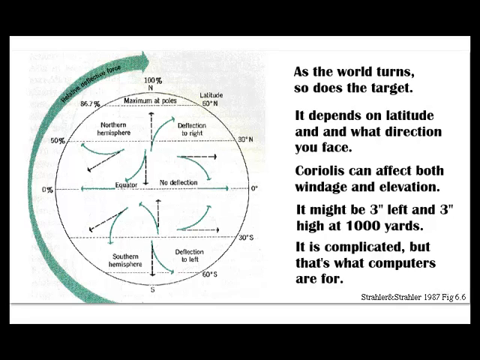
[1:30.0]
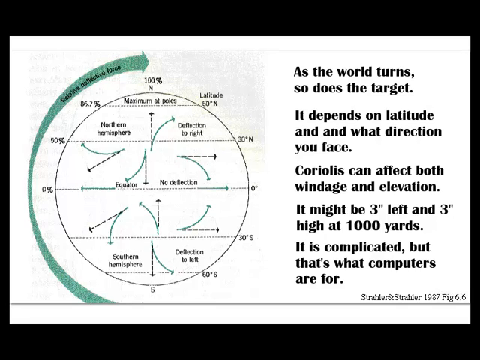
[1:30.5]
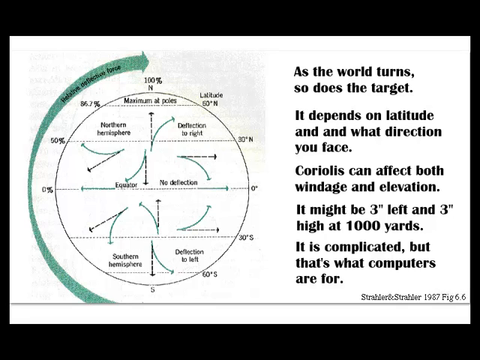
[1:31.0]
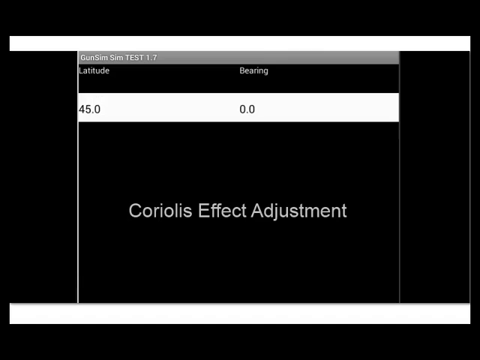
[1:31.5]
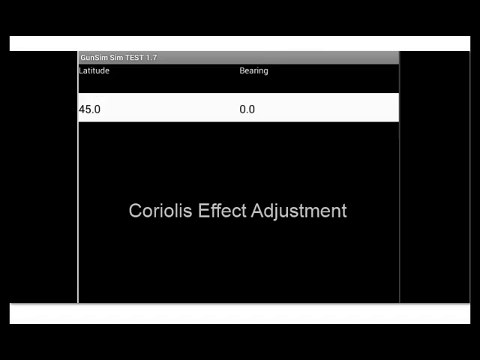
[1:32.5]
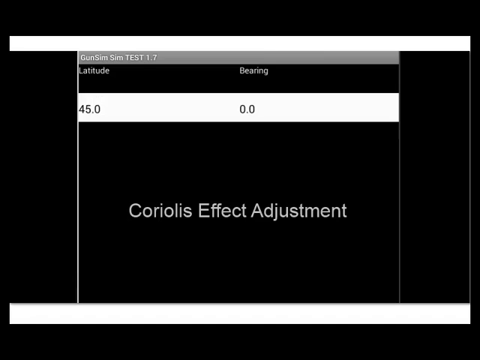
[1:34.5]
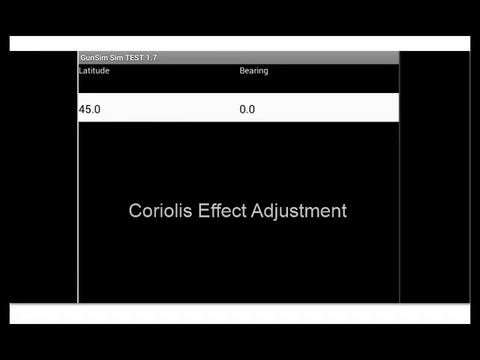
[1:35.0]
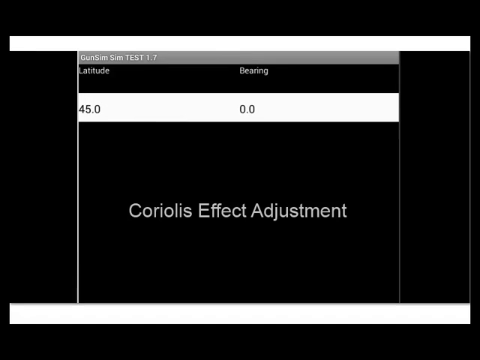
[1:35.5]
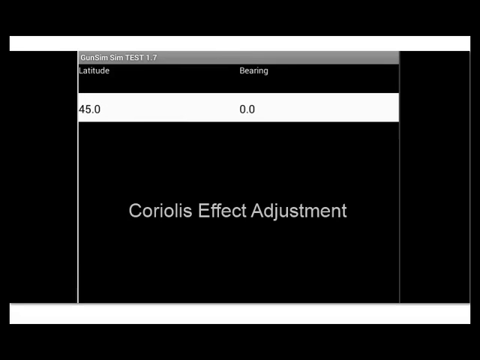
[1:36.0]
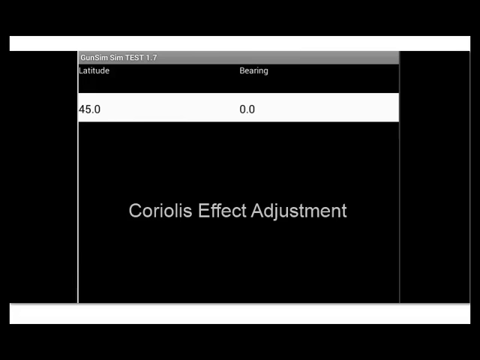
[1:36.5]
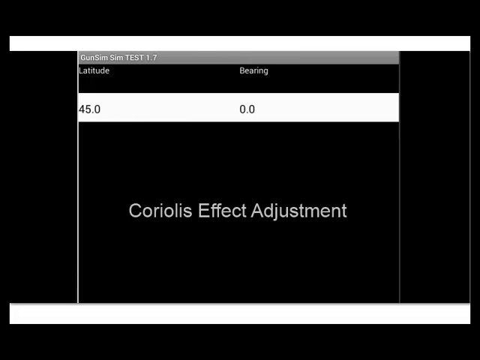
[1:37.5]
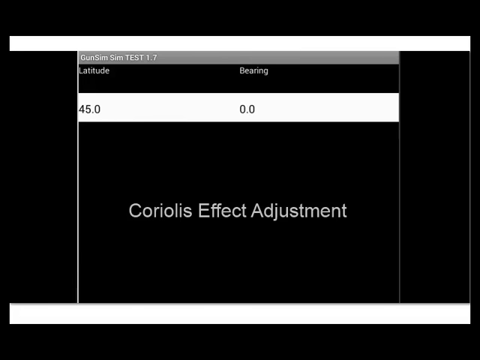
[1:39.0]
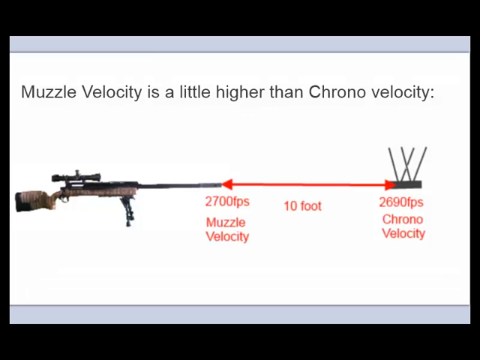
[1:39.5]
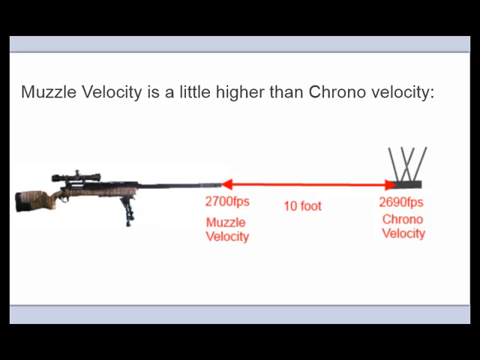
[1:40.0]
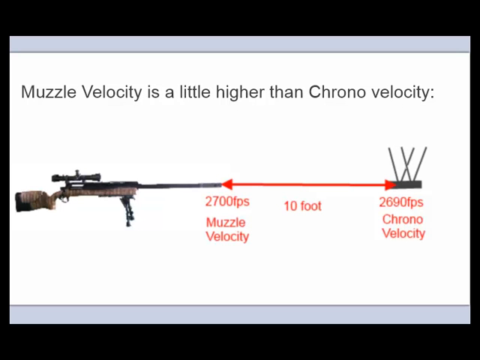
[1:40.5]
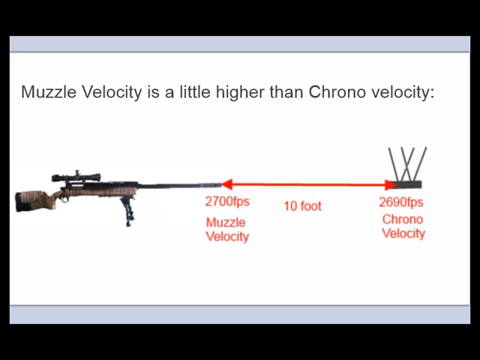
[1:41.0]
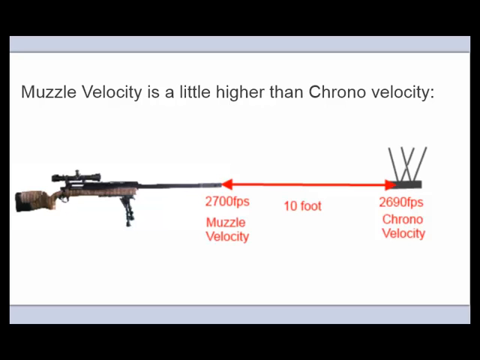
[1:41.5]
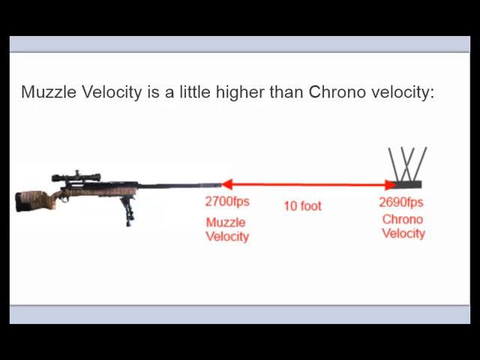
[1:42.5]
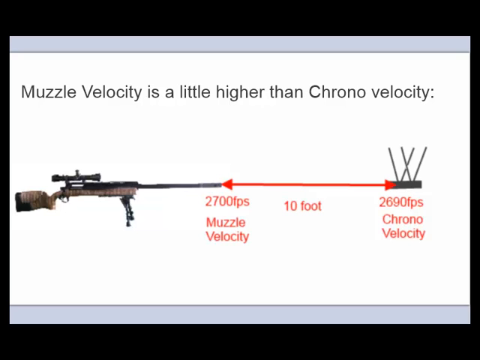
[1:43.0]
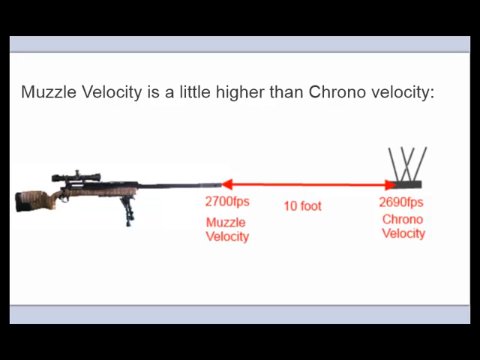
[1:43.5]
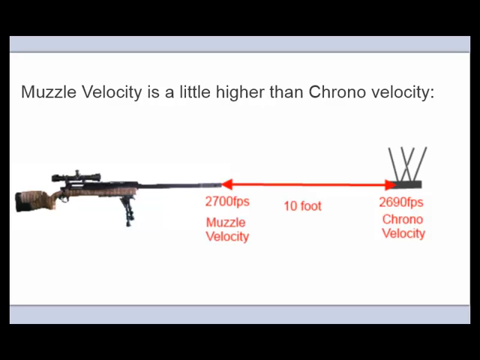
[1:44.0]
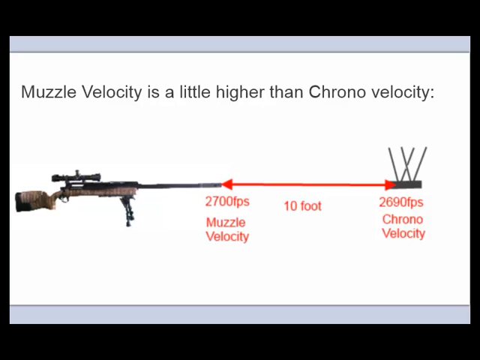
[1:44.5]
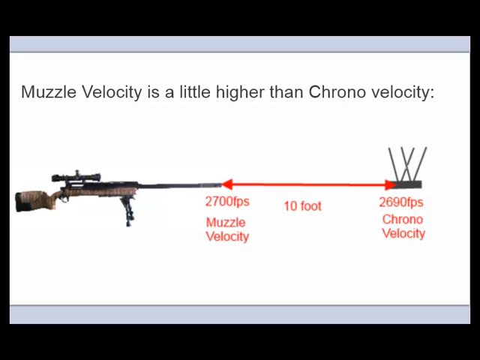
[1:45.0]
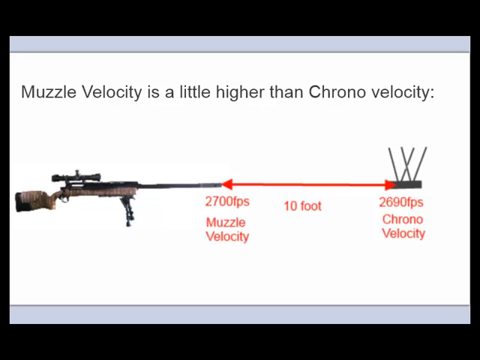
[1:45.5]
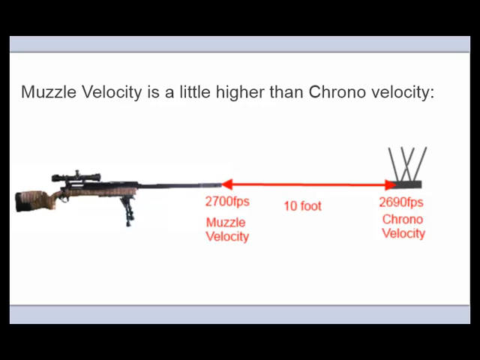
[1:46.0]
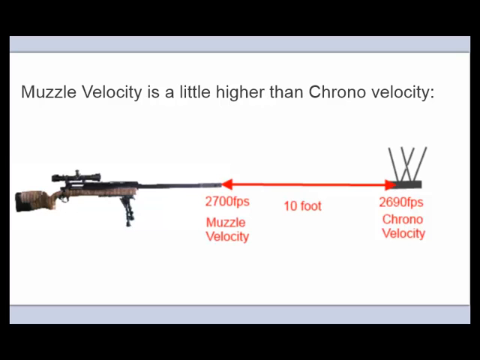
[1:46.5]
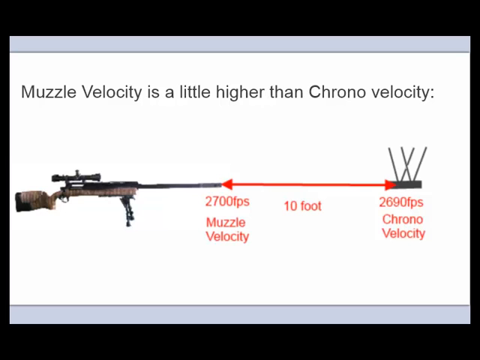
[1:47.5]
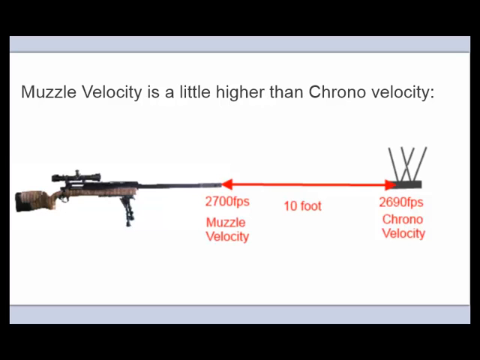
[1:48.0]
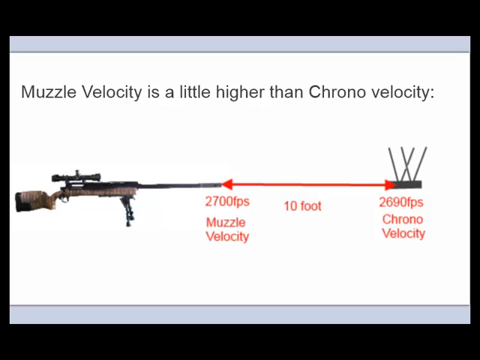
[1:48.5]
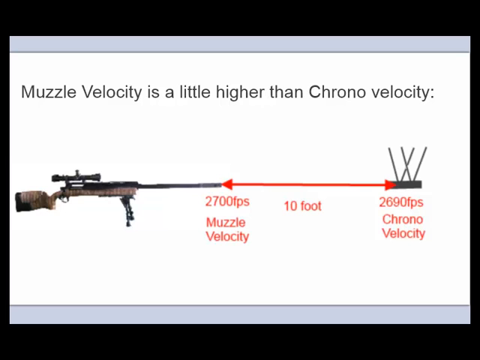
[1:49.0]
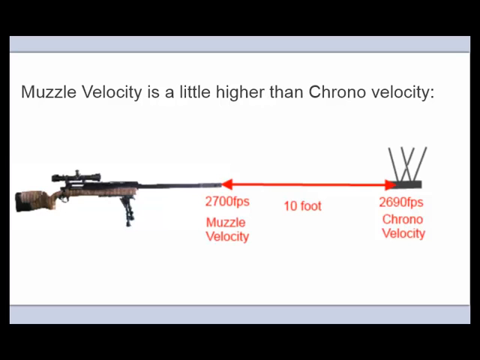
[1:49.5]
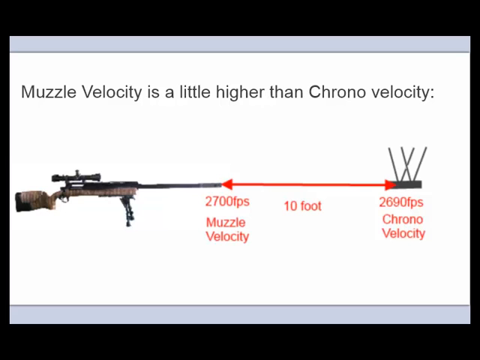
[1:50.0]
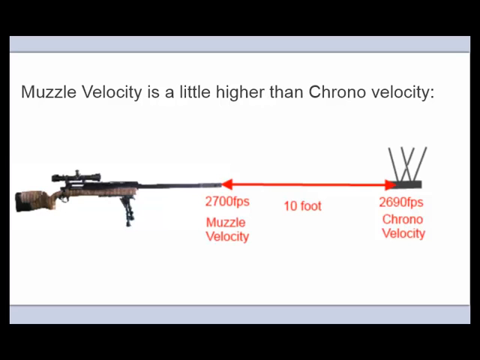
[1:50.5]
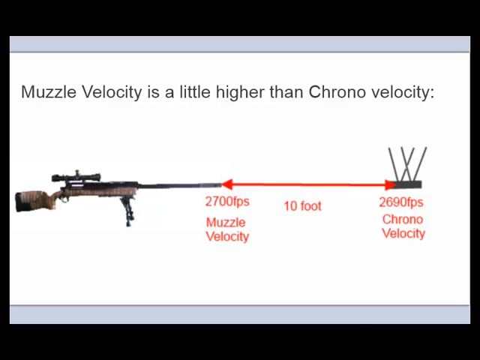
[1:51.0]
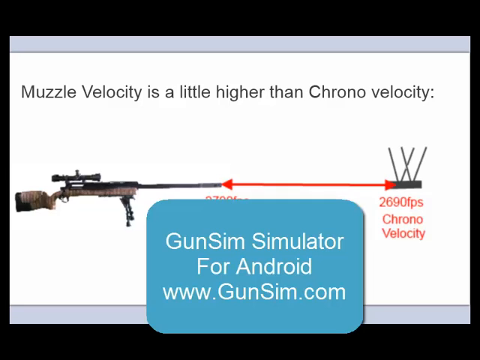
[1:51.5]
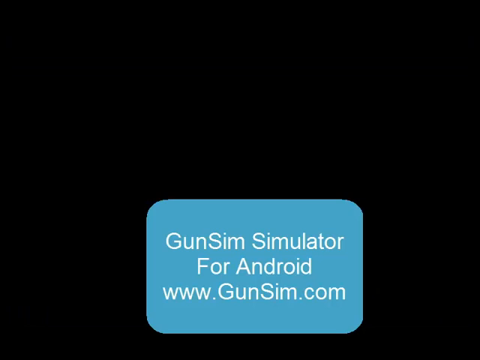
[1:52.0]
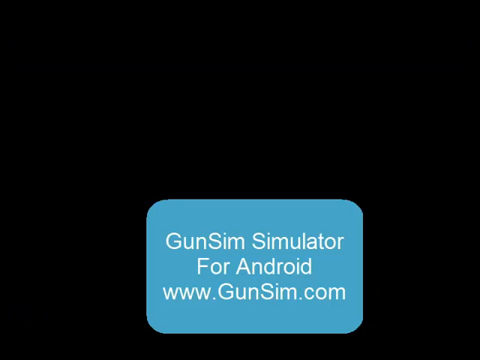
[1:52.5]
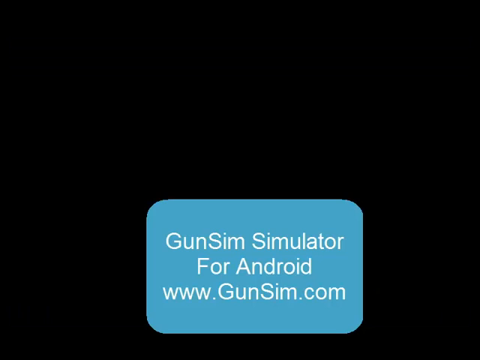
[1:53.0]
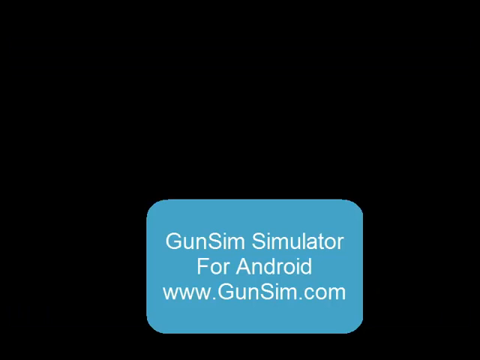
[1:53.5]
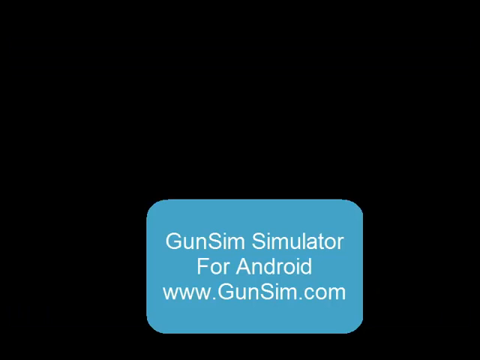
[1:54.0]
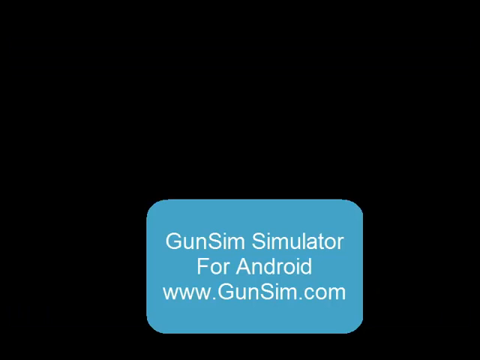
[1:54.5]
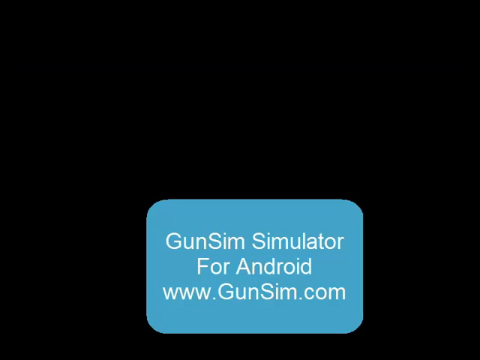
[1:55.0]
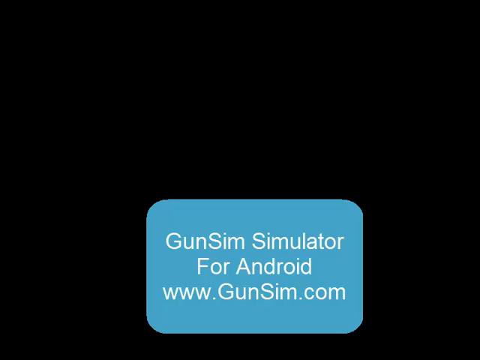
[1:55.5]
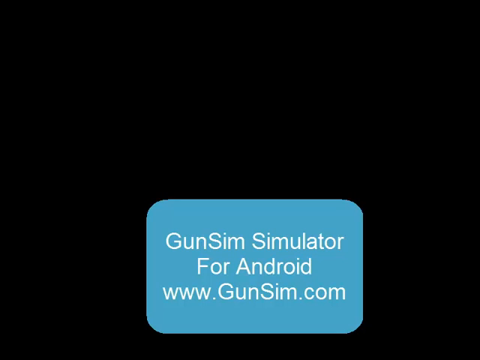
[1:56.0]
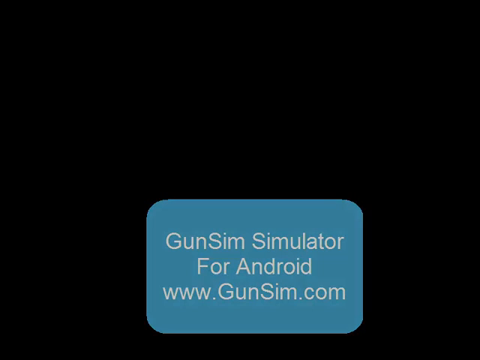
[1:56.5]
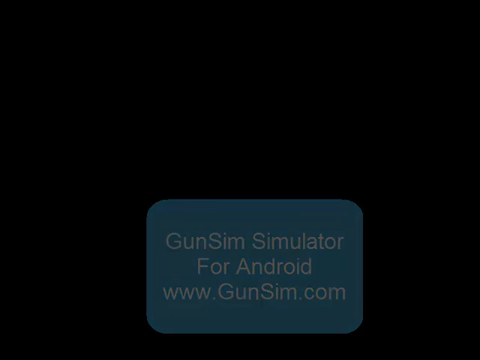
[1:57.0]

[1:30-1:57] A chart is shown in the form of a circle with all kinds of directional forces moving. It seems to show latitude and longitude, with N representing North, and there seems to be a worldview of Earth. It acts as a sort of teaching illustration of how the force moves in the Coriolis effect. The next screen has a caption that says "Coriolis Effect Adjustment", with latitude shown on the left side and 0.0 displayed. The following screen seems to show a gun. The very top text says "Muzzle Velocity is a little higher than Chrono Velocity". In the center is a gun with a scope, apparently a sniper rifle of some sort, with the FPS of the Muzzle Velocity and Chrono Velocity shown, shooting at an object of some sort.